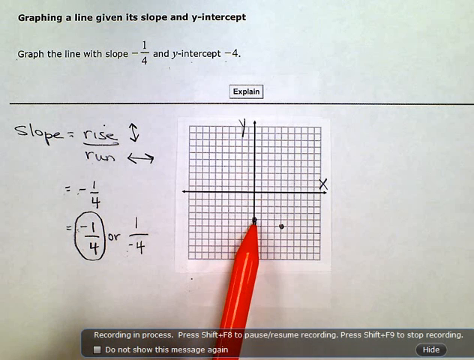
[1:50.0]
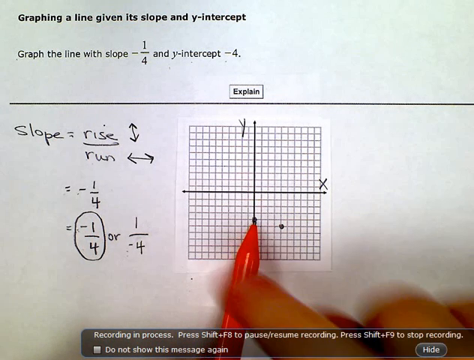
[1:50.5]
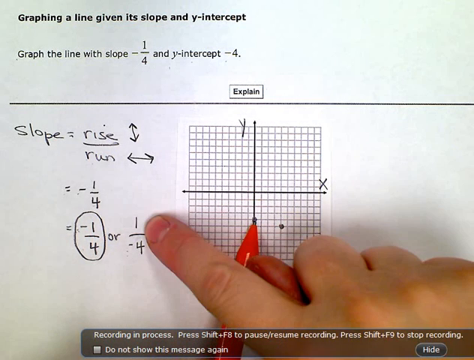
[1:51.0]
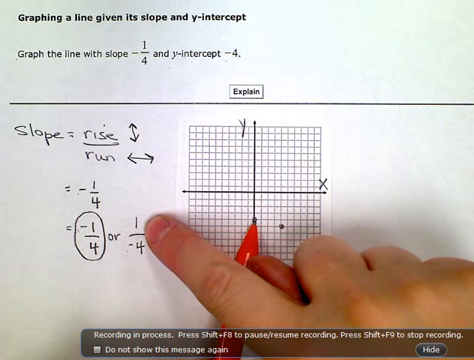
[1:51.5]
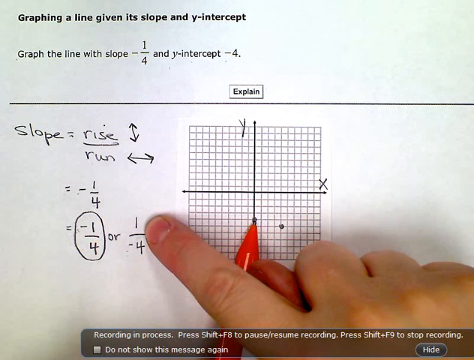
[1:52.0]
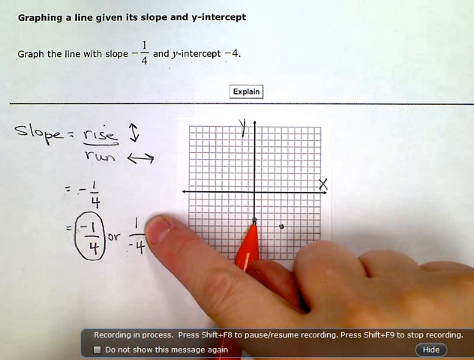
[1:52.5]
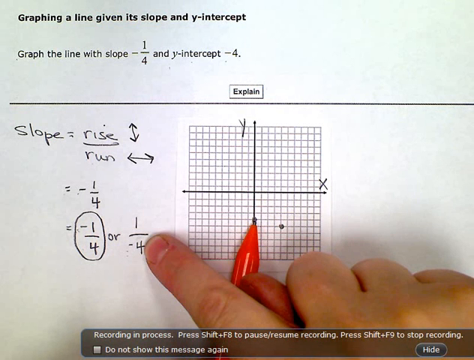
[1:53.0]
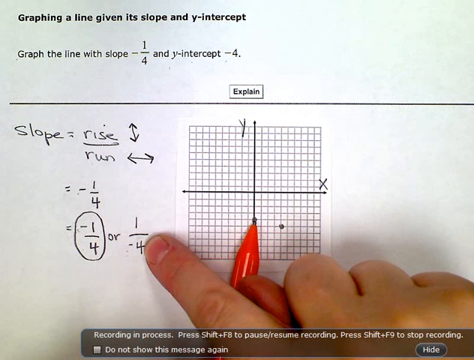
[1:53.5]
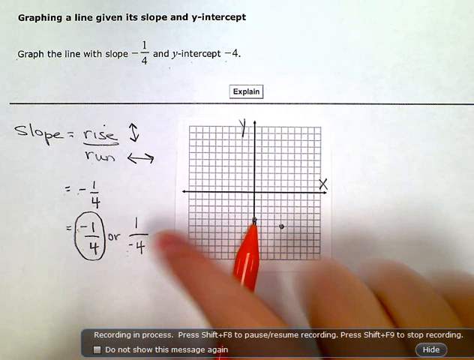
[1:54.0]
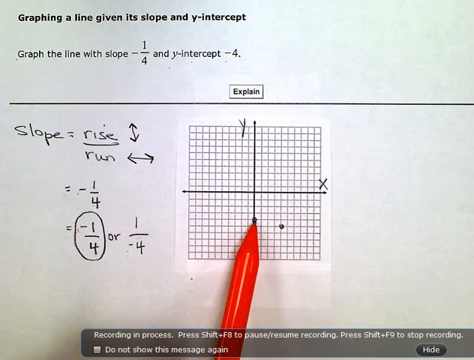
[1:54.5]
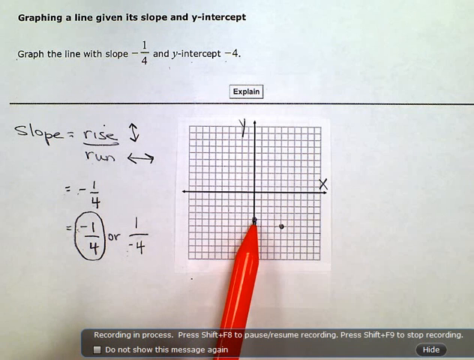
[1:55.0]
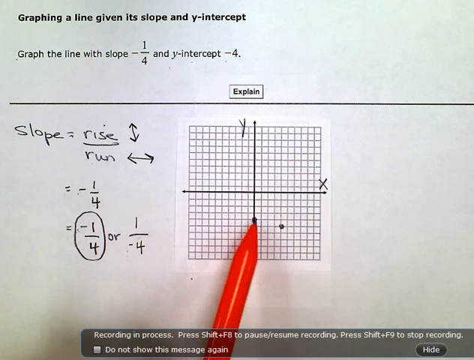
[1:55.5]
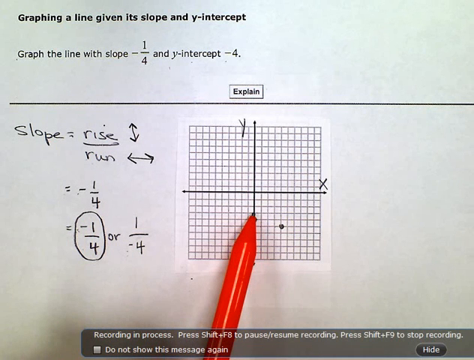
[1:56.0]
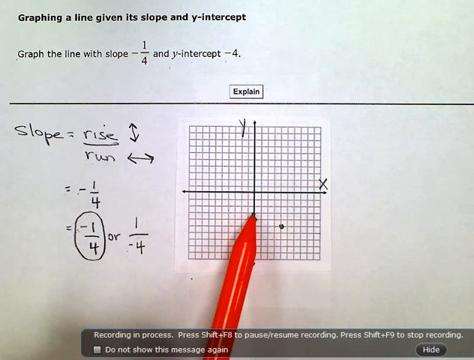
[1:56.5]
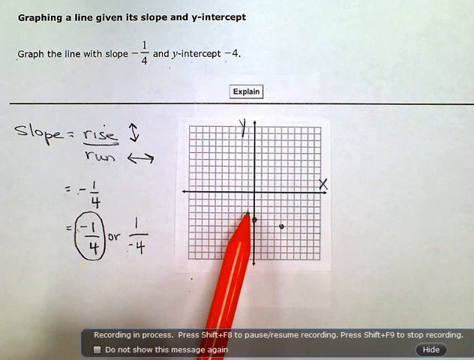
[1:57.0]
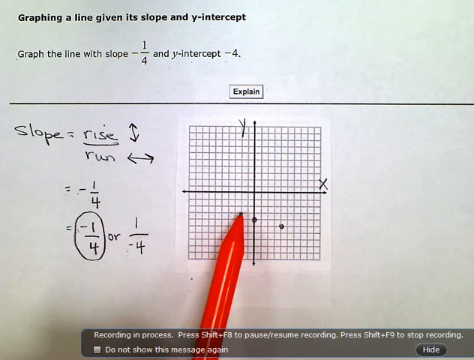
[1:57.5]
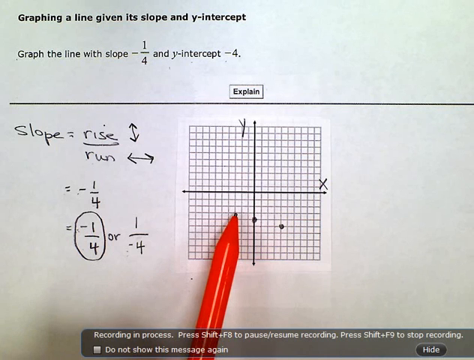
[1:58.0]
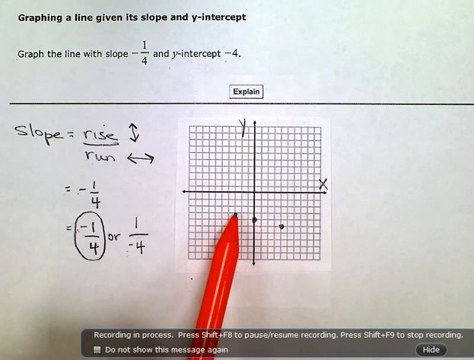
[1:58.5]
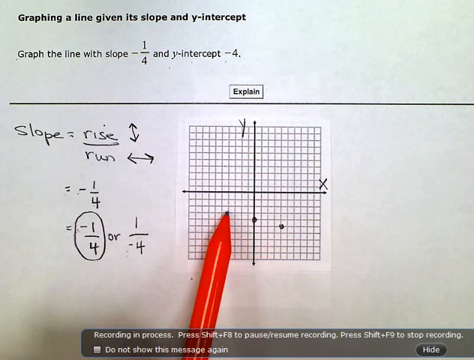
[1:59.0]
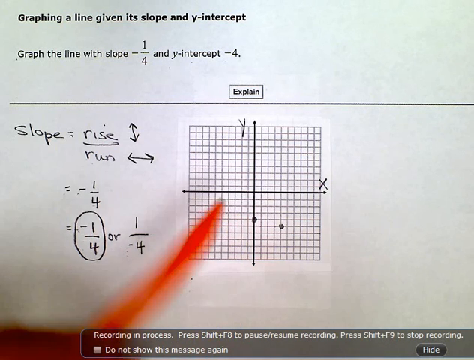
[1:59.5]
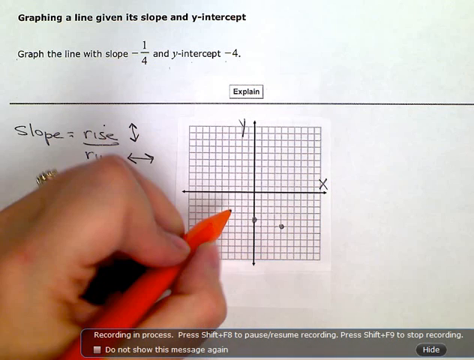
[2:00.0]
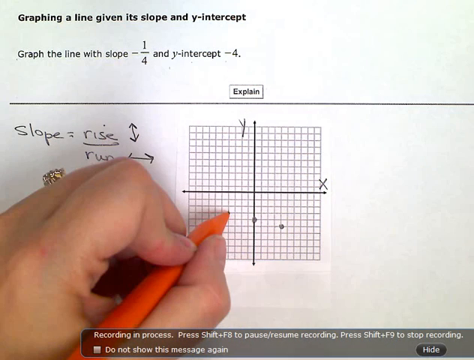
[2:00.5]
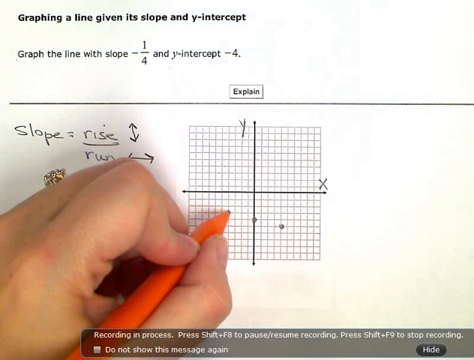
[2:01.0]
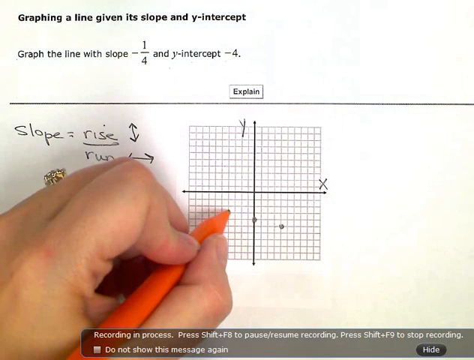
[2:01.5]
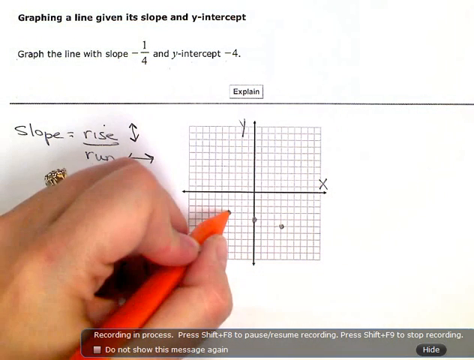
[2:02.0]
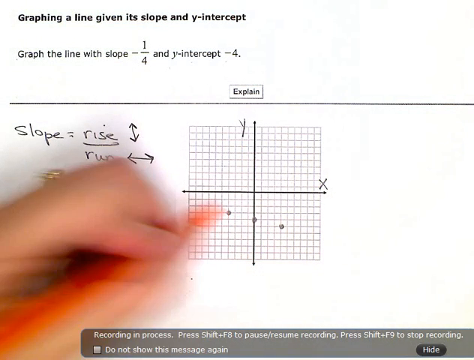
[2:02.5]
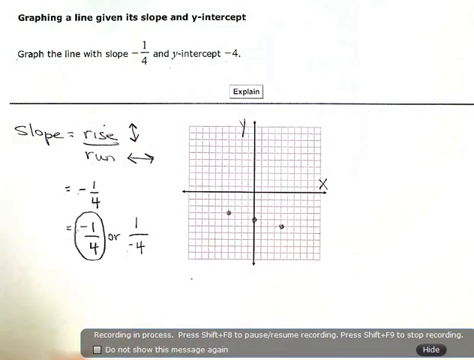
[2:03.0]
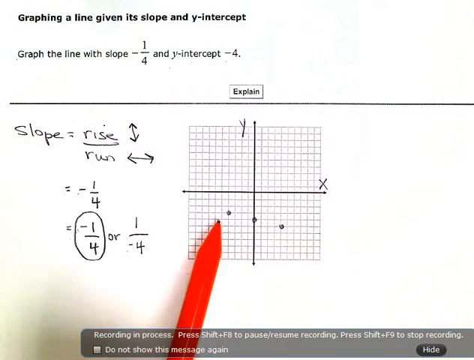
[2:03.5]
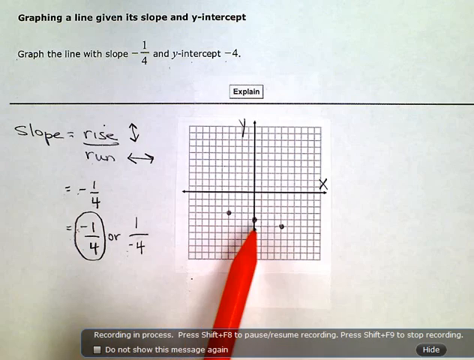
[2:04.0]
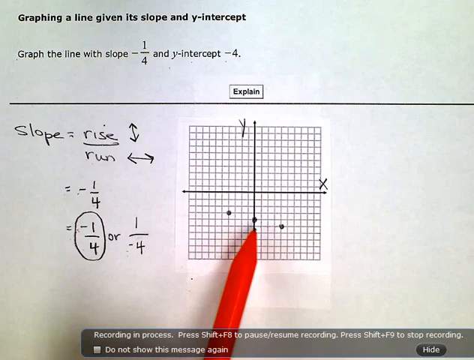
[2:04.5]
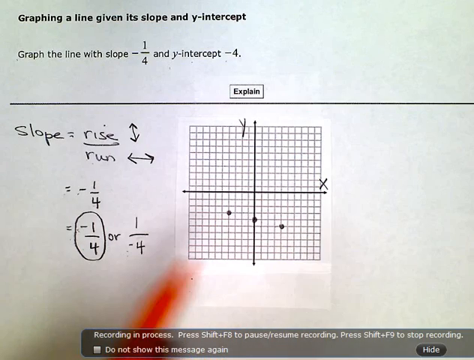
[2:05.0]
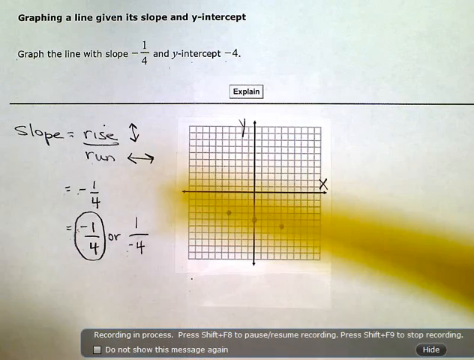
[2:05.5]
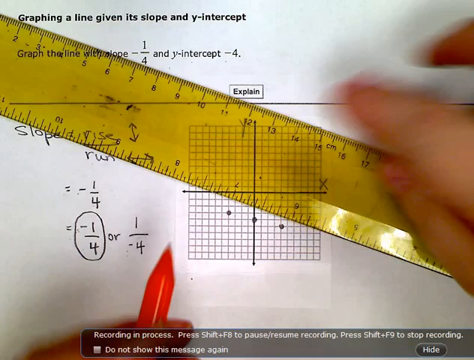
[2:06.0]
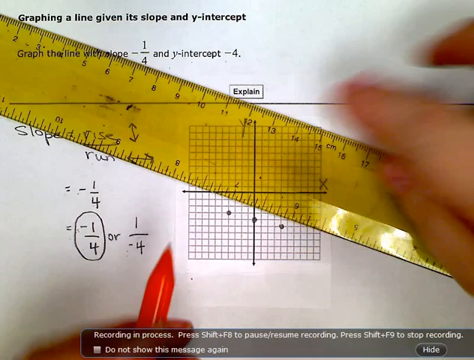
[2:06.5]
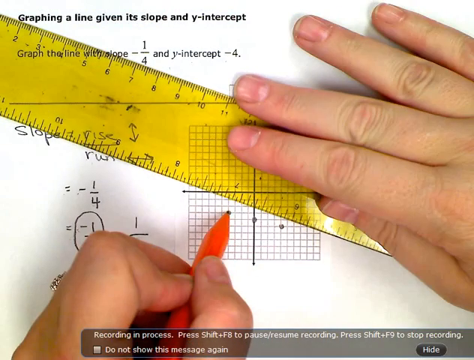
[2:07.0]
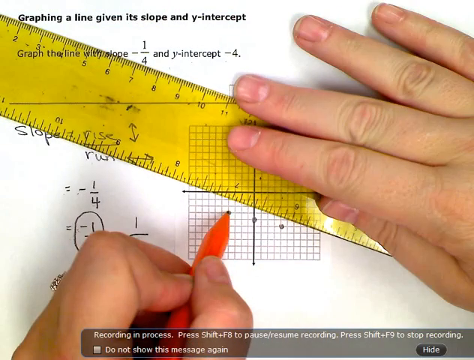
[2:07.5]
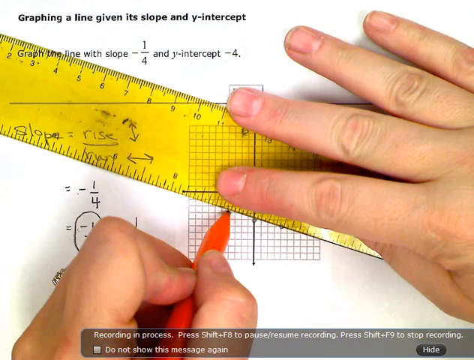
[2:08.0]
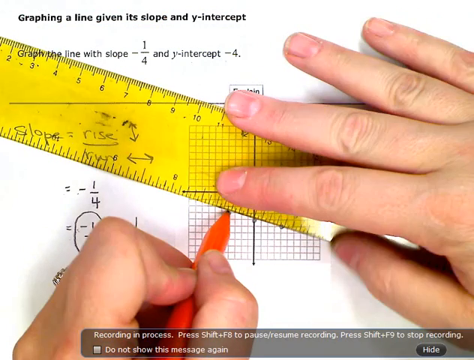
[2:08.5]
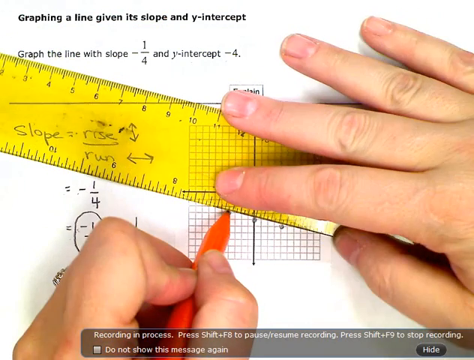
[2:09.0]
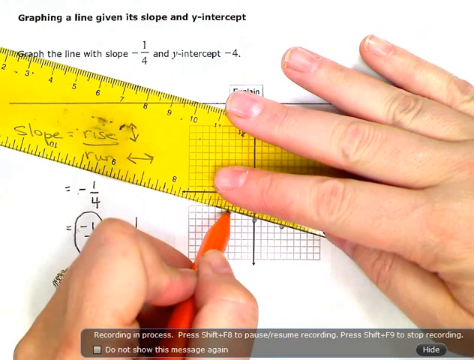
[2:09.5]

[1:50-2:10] After the y-intercept has been plotted, the circled negative 1 over 4 appears to be plotted, seemingly starting from the y-intercept and marking the 4 along the x-axis. The instructor then applies a dot on the left side of the grid, probably the negative 4 on the x-axis. The rise over run slope formula appears to be shown. The last plotted point on the grid is unclear but appears to be on the negative x-axis. Then the instructor picks up a ruler, apparently to draw a line through the three plotted points.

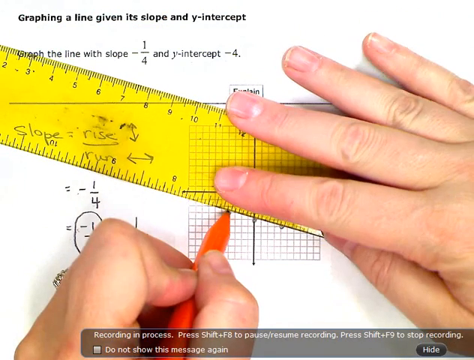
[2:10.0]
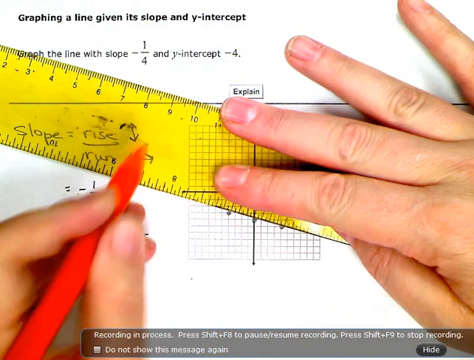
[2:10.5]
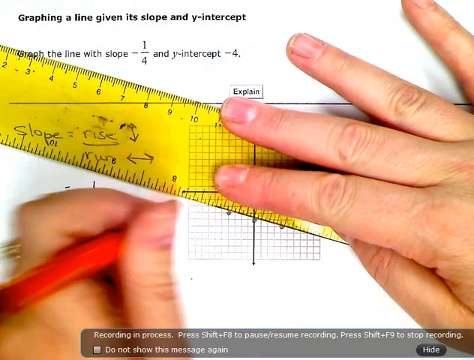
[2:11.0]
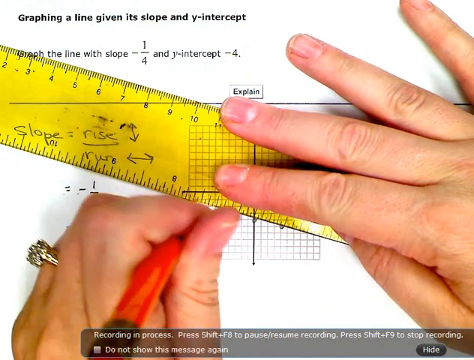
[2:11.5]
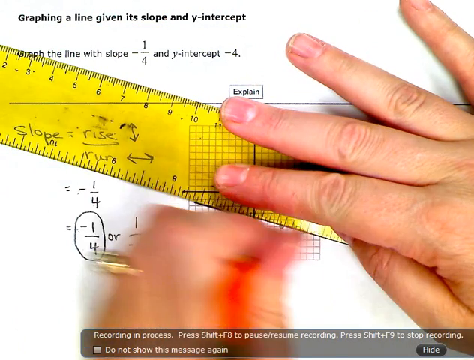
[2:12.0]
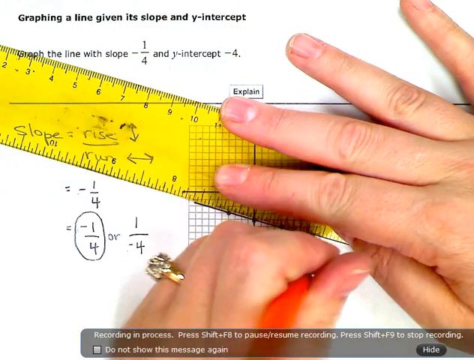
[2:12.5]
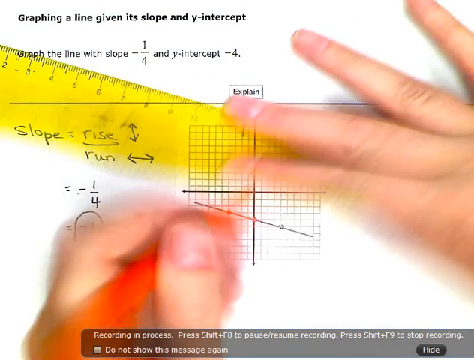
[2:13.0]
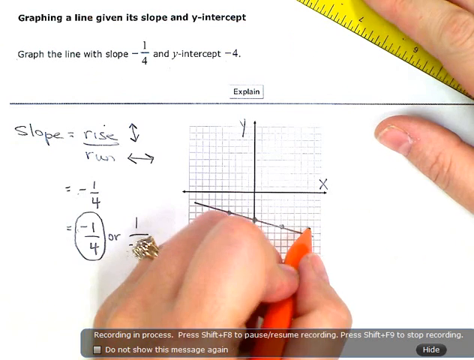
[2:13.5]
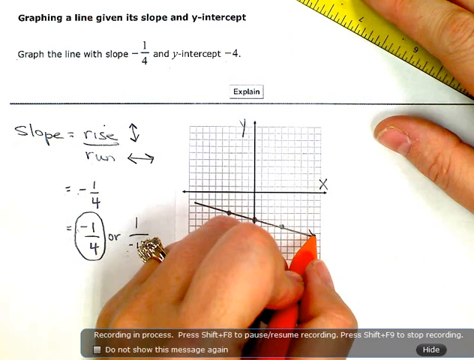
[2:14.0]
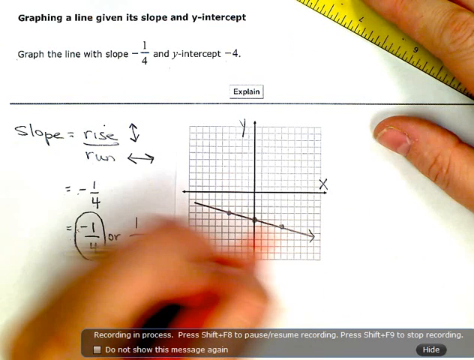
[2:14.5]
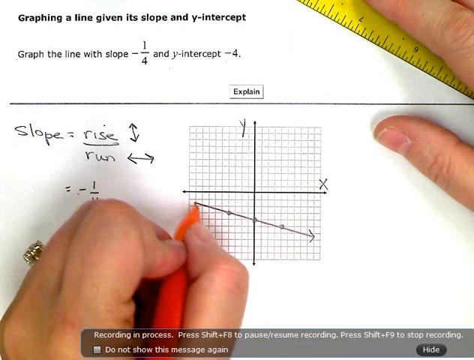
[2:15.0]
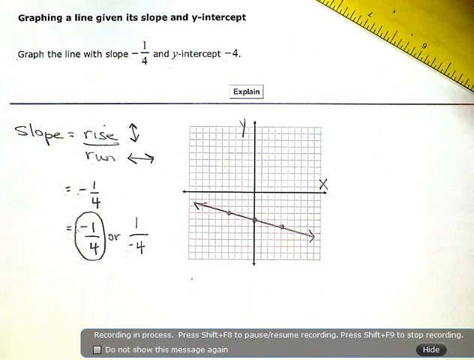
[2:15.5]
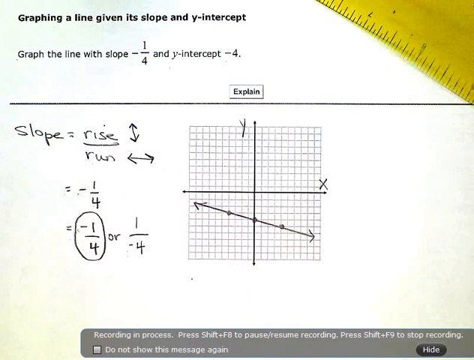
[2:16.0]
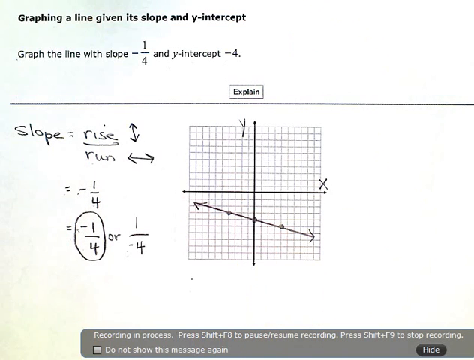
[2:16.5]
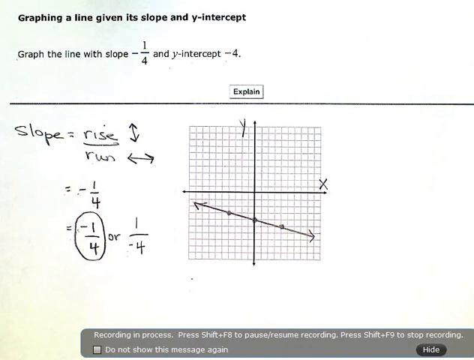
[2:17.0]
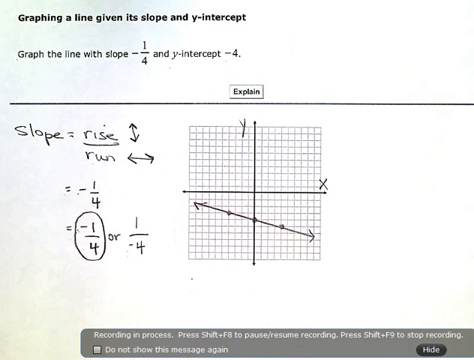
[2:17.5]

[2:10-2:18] Using a ruler, the instructor continues drawing a line through the three dotted points and across the grid. They then point an arrow to the right side and then the left, apparently ending by drawing the line. There is a precise movement with the orange writing utensil on the bottom portion of the grid, in what seems to be the negative x and y area, probably related to the y-intercept of negative four. The slope formula, rise over run, is on the ruler.